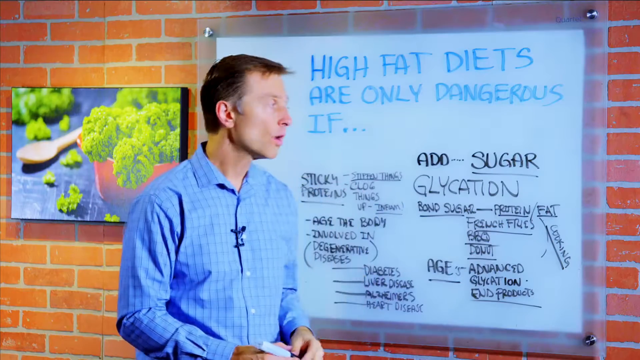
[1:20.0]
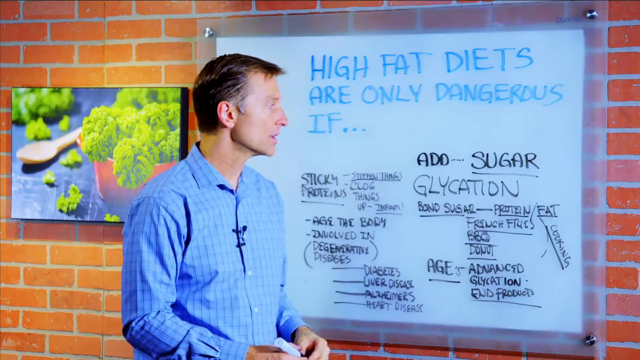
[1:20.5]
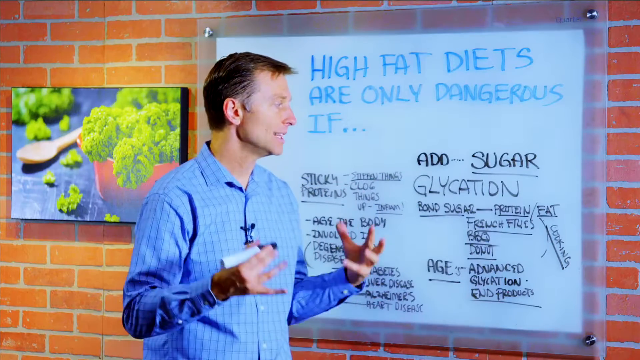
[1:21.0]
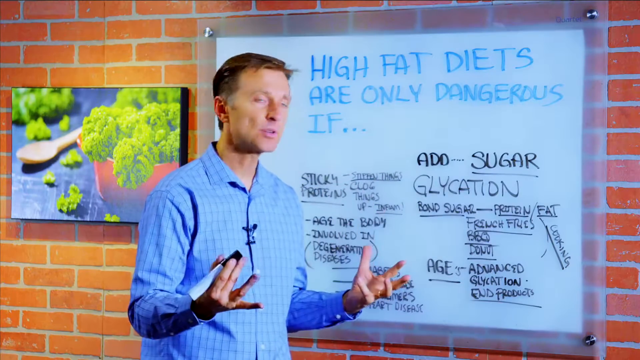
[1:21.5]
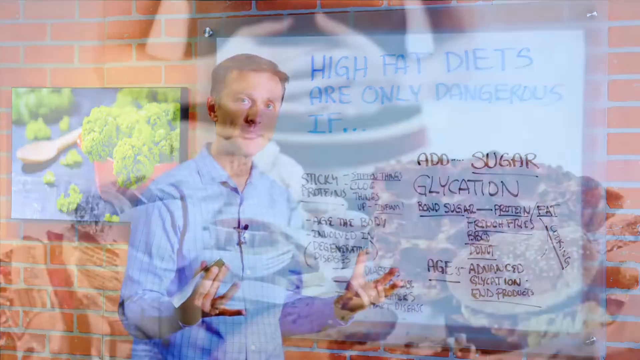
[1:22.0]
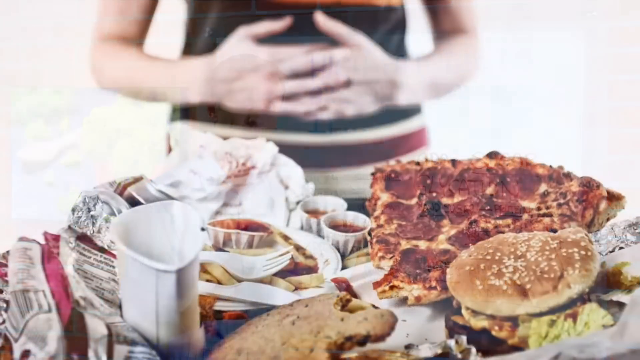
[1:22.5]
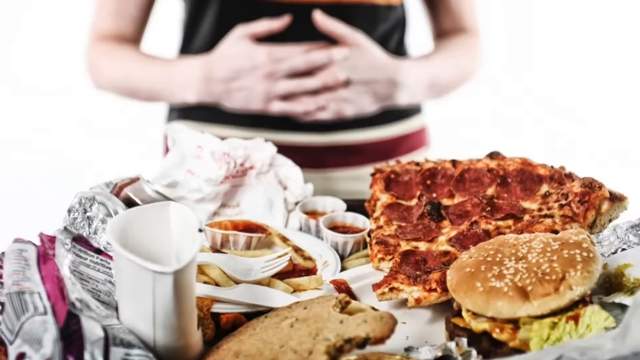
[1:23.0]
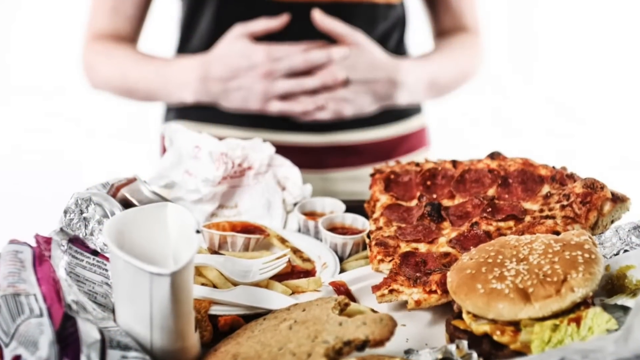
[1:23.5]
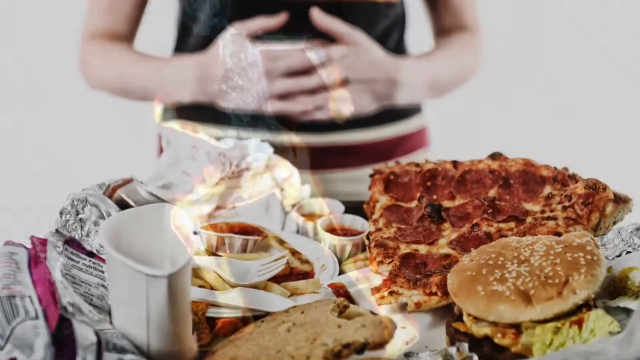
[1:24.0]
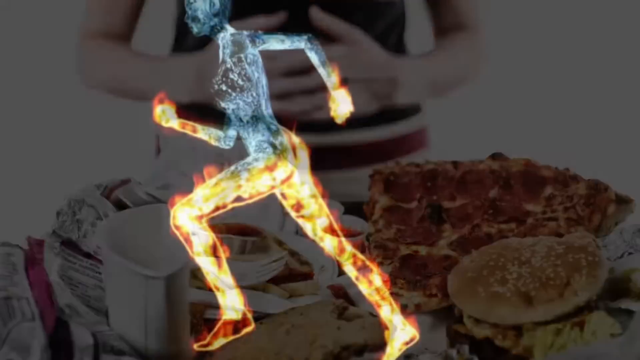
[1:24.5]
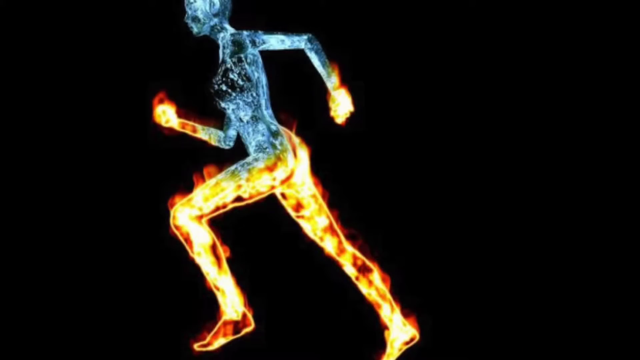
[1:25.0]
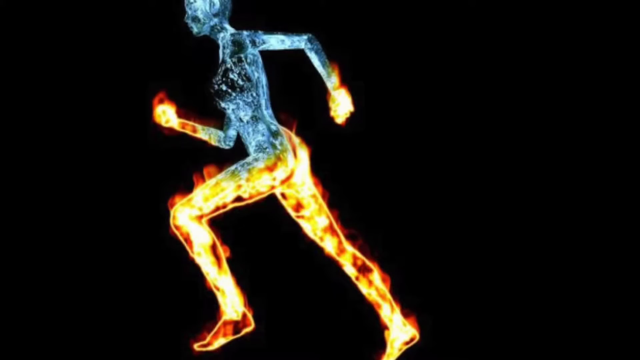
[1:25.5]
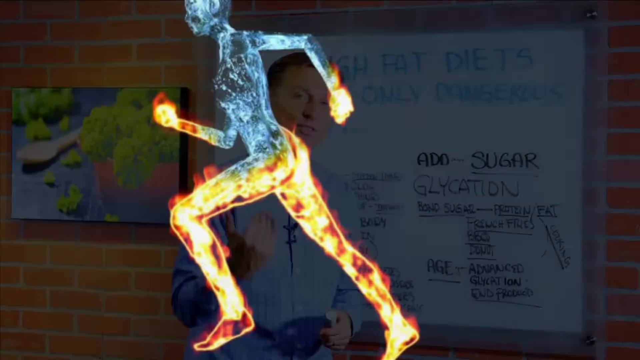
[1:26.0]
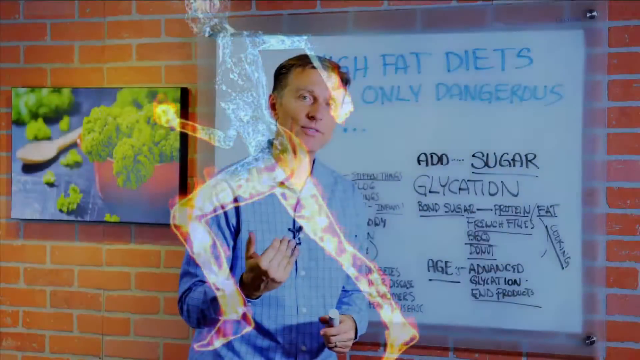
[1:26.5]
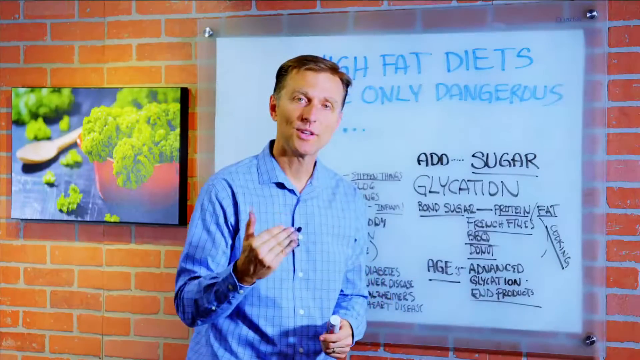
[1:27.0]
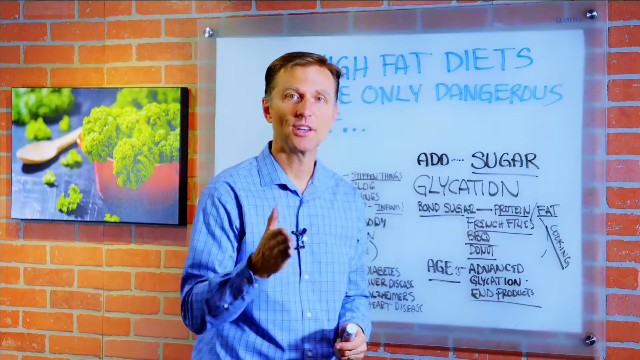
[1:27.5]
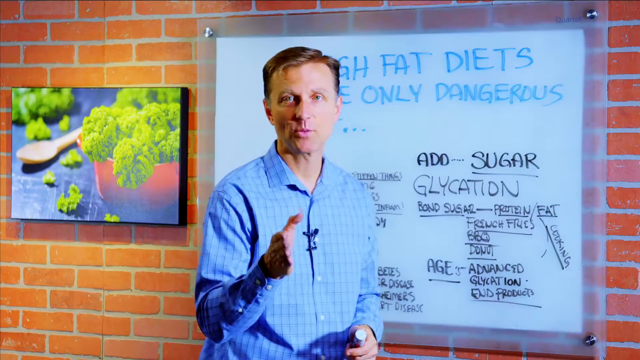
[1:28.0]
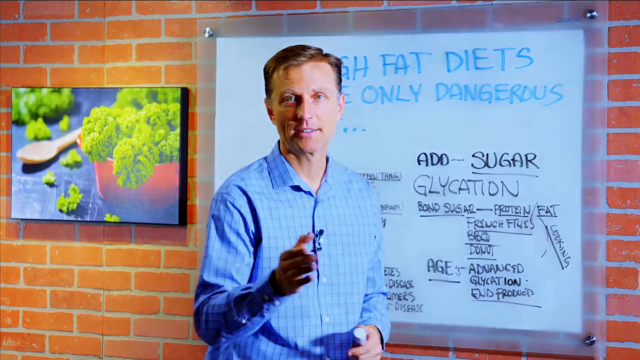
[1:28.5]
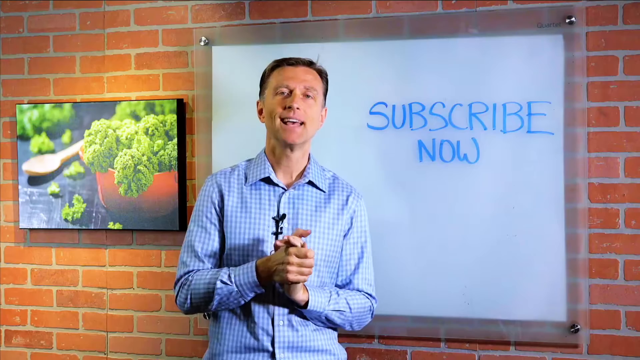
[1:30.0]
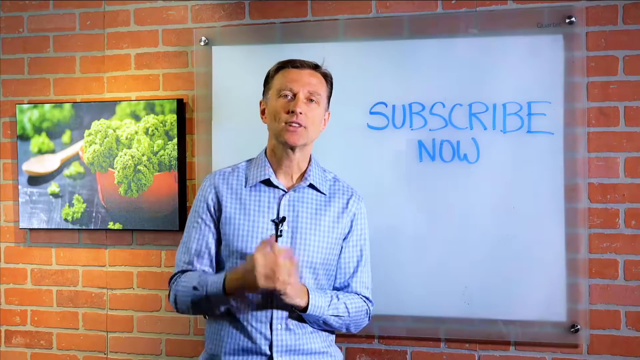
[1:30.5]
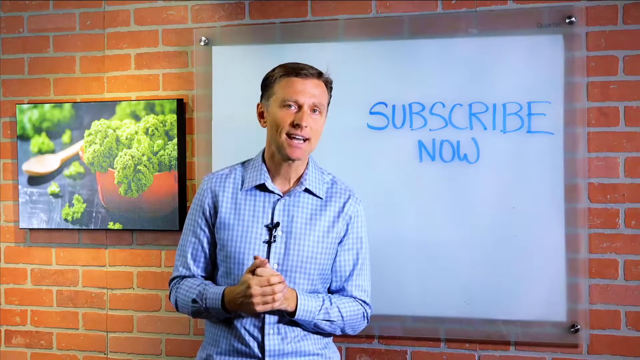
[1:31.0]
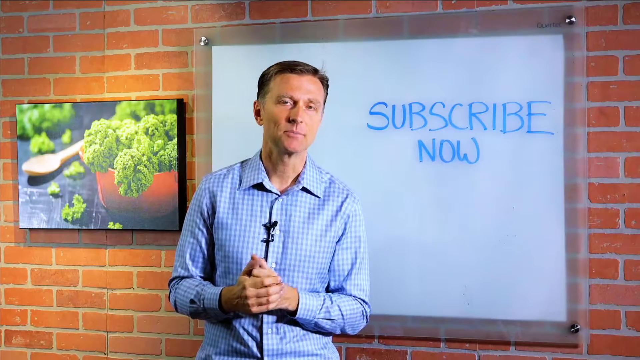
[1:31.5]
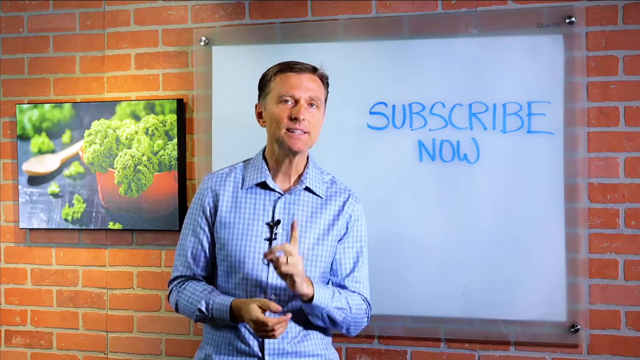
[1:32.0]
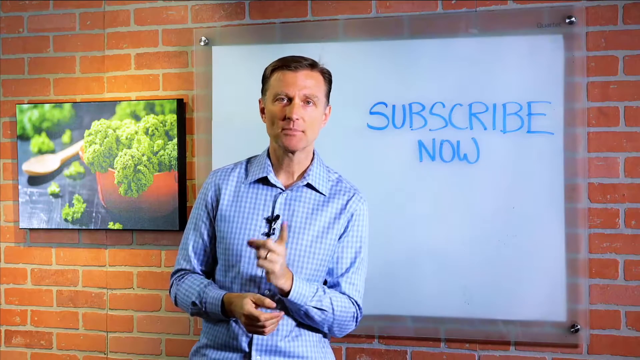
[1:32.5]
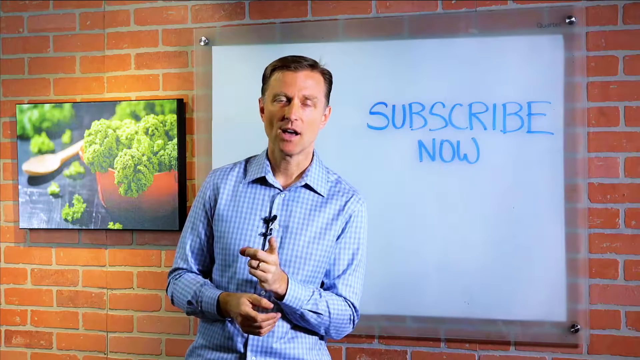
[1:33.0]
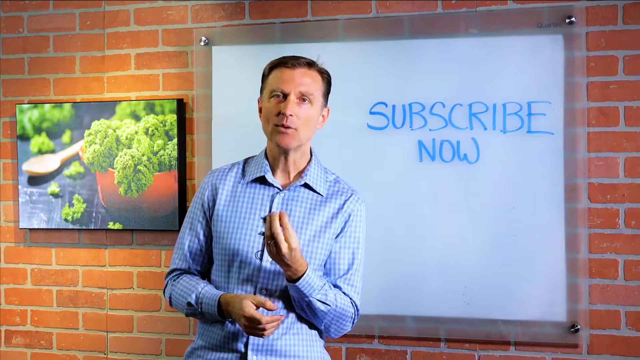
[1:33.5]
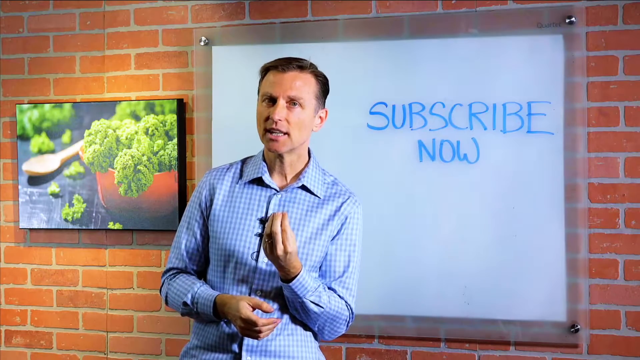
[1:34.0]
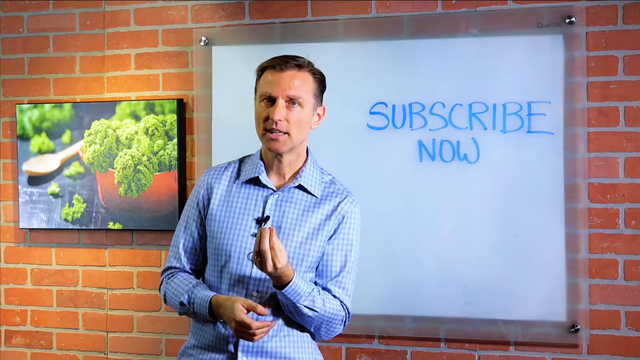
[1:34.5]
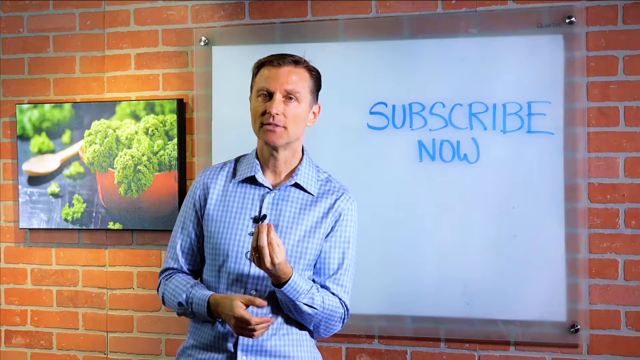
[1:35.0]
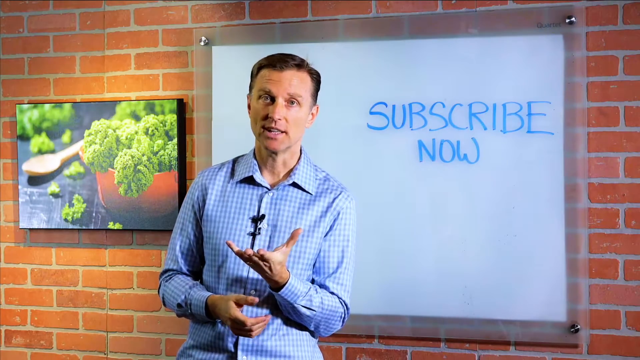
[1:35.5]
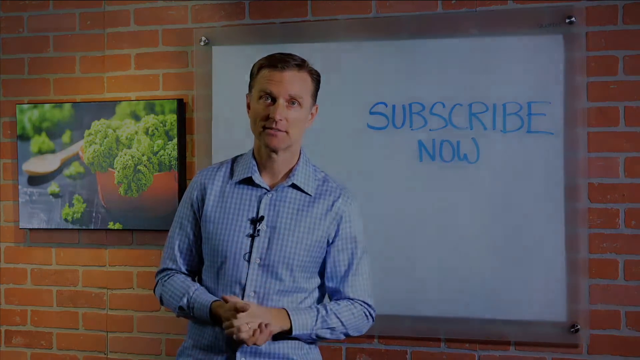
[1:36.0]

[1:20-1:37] Many fruits are shown. A document appears, but what is written in it is hard to make out.